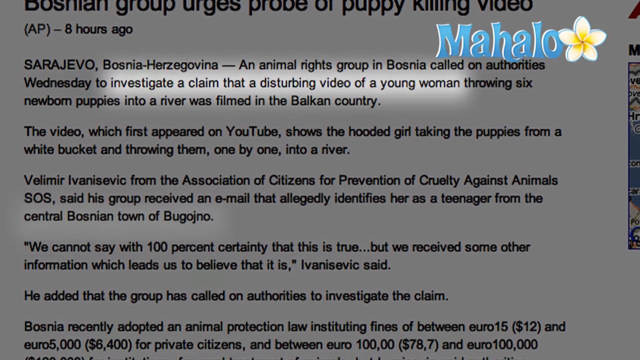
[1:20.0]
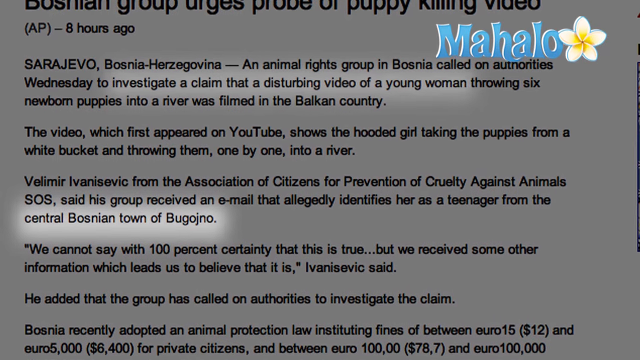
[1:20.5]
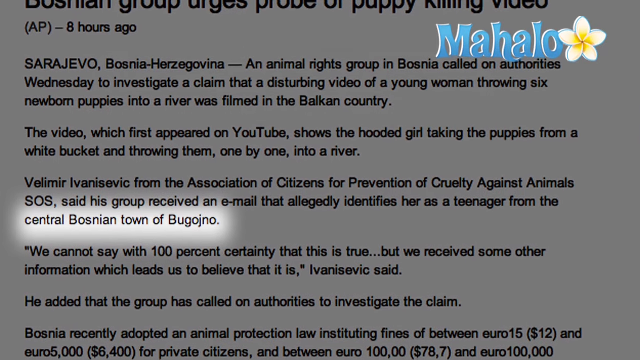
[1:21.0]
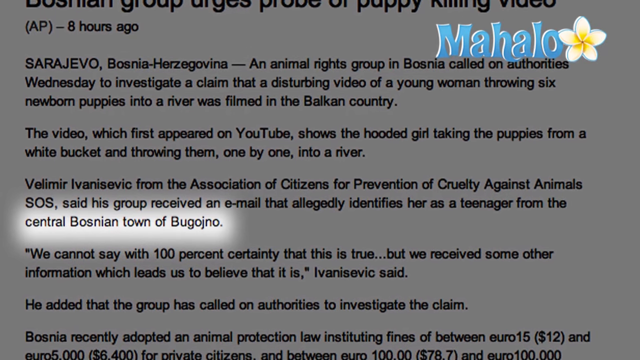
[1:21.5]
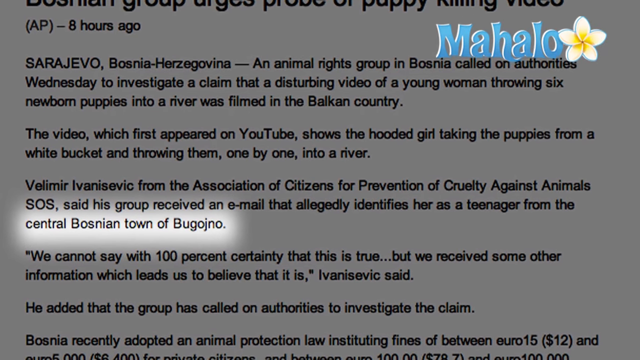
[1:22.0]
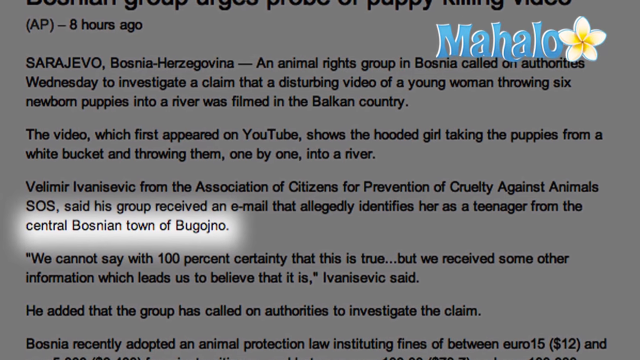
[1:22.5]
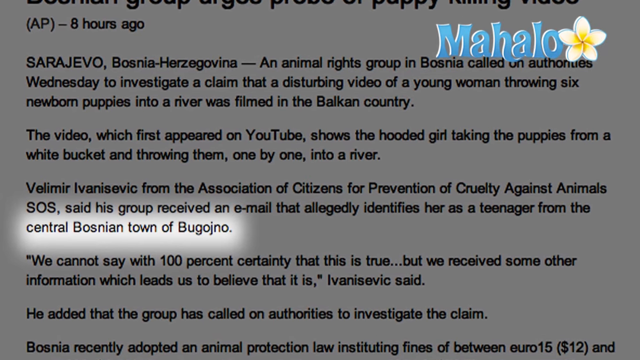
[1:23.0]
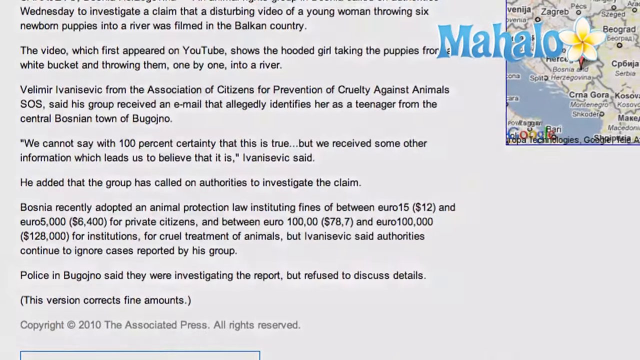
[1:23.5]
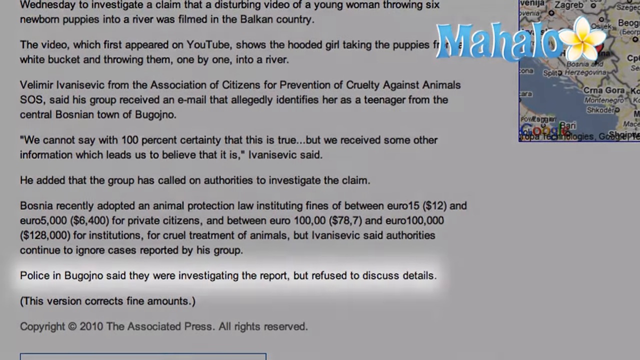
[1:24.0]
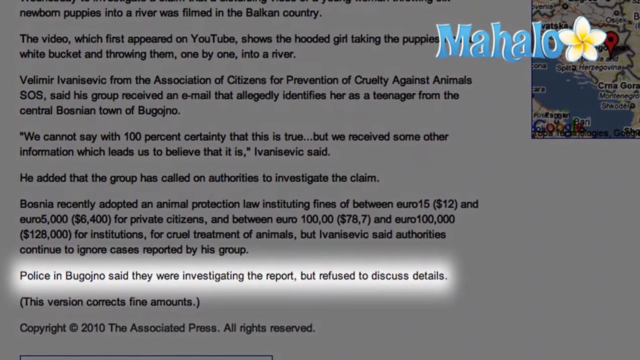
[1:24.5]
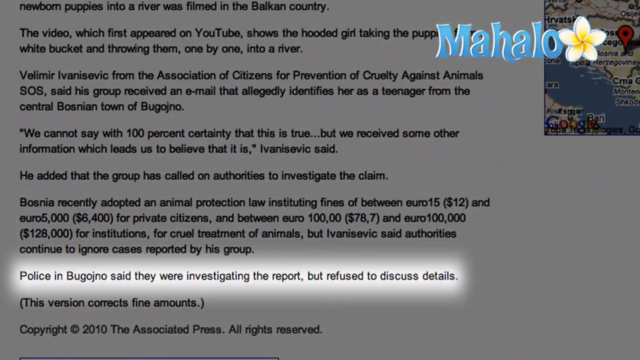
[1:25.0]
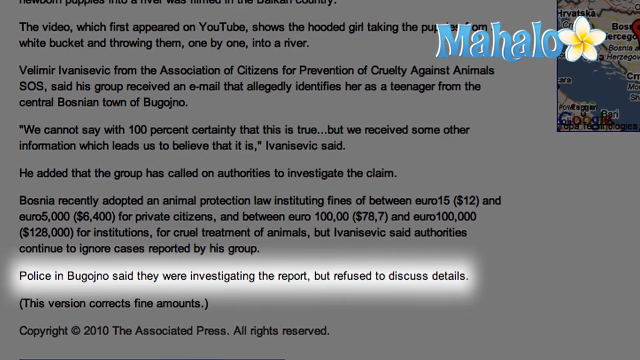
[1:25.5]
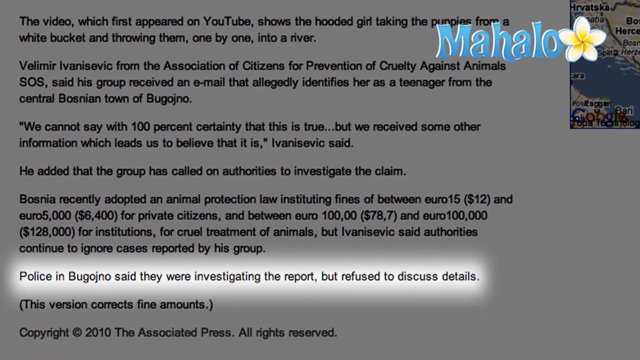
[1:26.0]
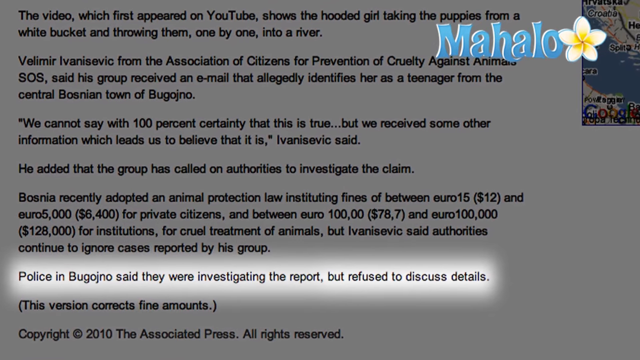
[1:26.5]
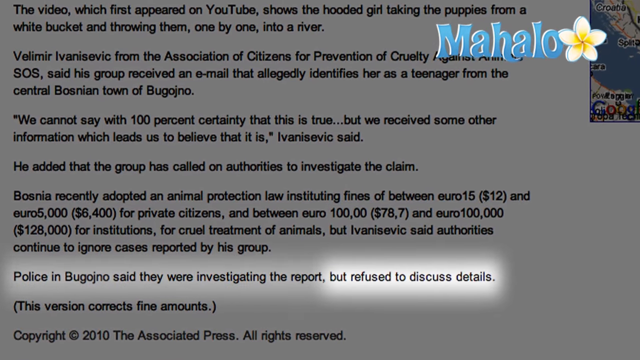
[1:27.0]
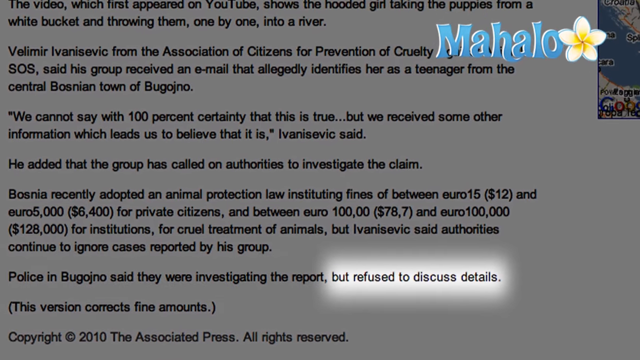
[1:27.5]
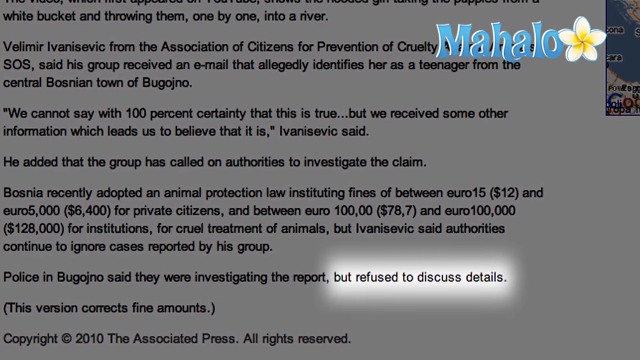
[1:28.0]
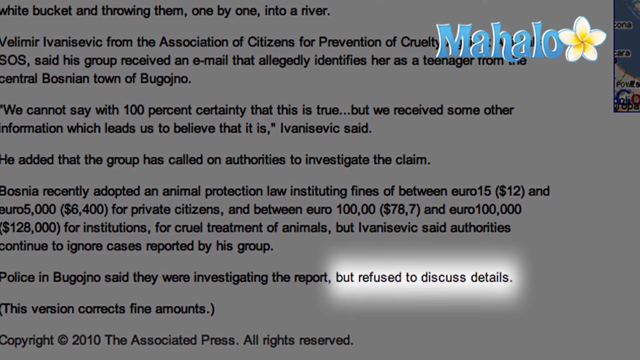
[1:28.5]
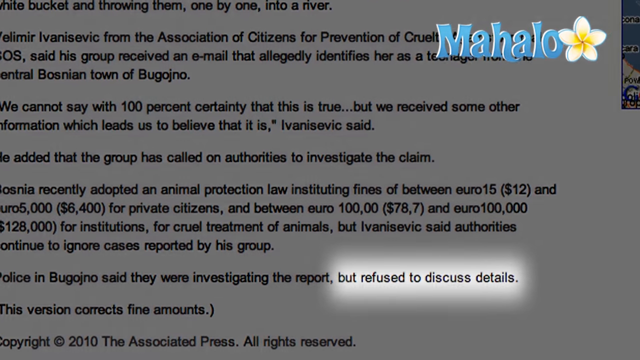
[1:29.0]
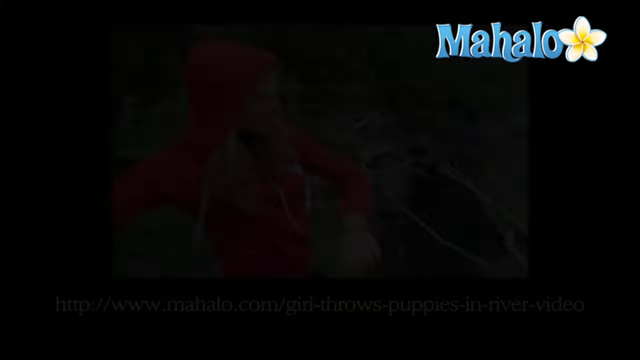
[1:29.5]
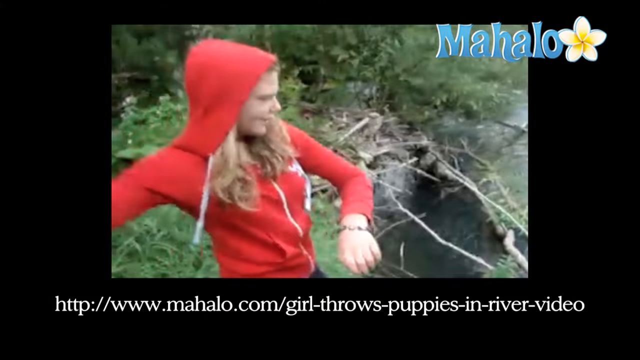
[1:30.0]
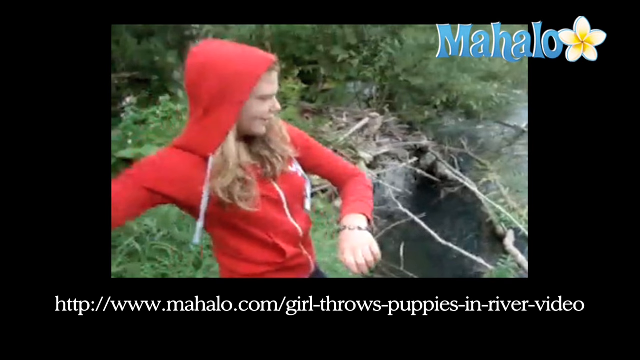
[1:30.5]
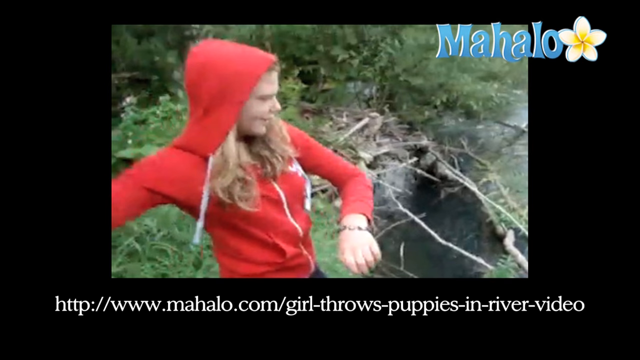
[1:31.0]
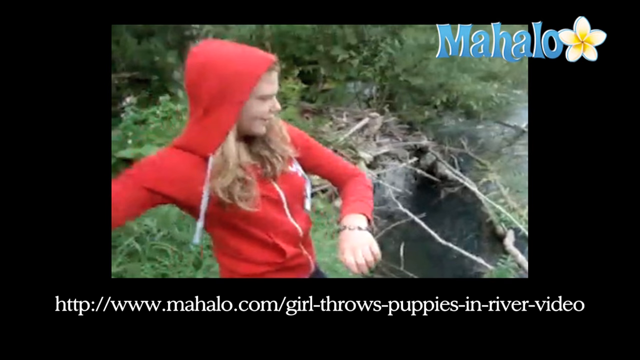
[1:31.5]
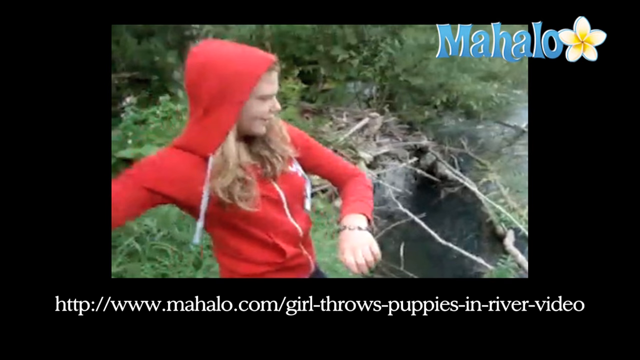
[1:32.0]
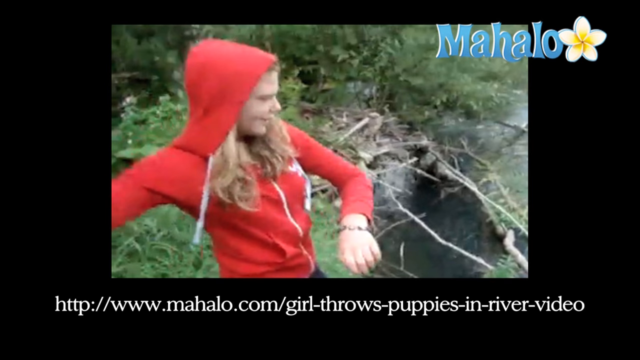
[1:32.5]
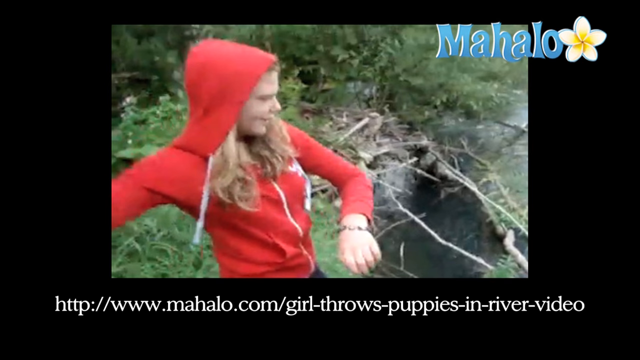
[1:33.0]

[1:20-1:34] A few words from the article are highlighted: "we cannot say with 100% certainty that this is true, but we received some other information, which leads us to believe that this is it." The article continues that the group has called on authorities to investigate the claim, and mentions that Bosnia recently adopted an animal protection law. The picture of the lady then appears again; she looks happy and not stressed at all.